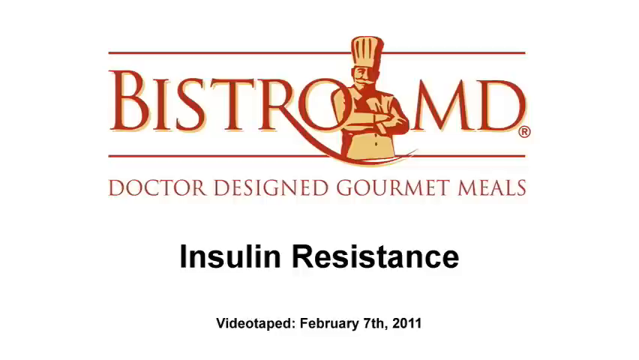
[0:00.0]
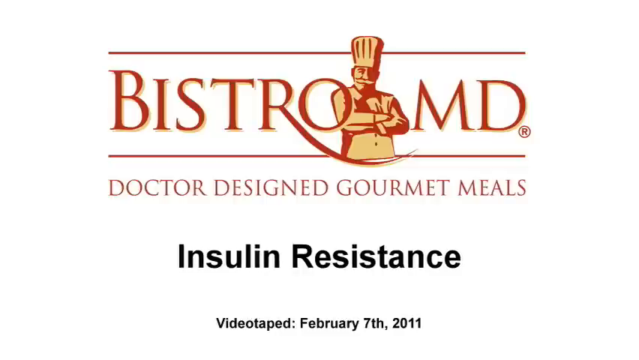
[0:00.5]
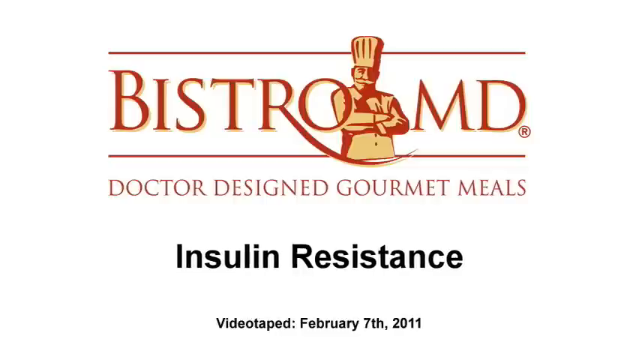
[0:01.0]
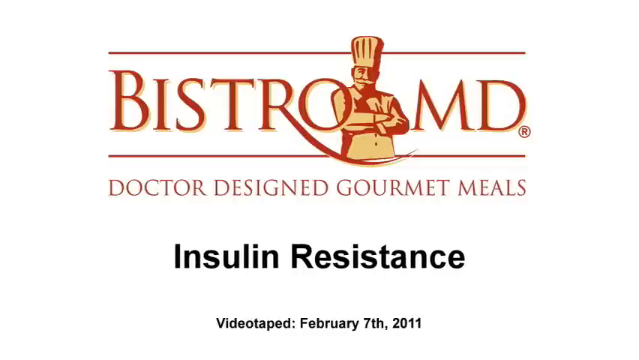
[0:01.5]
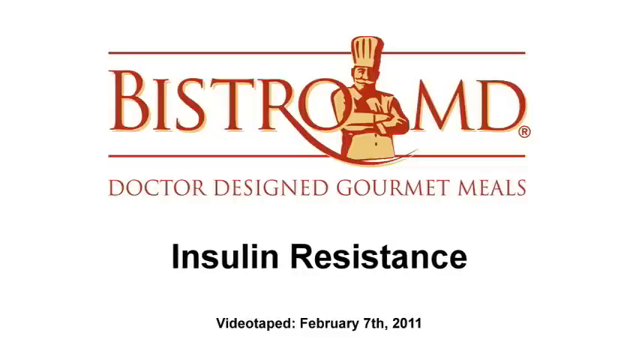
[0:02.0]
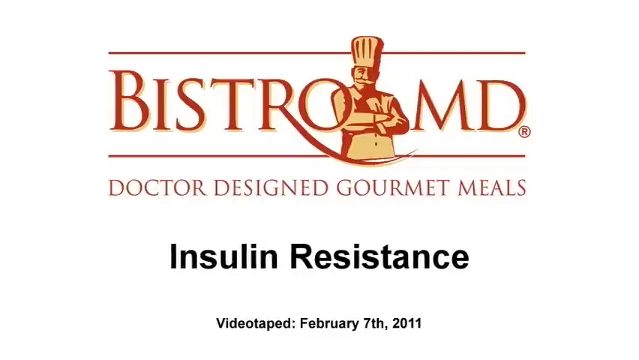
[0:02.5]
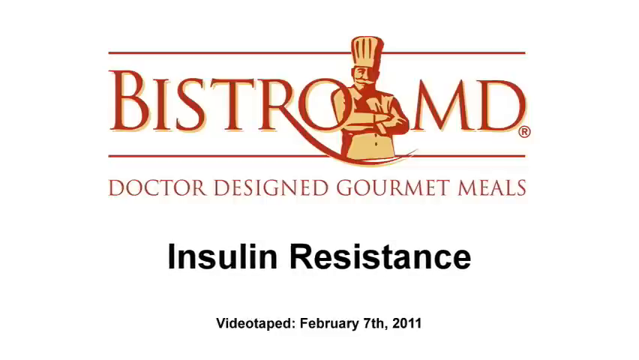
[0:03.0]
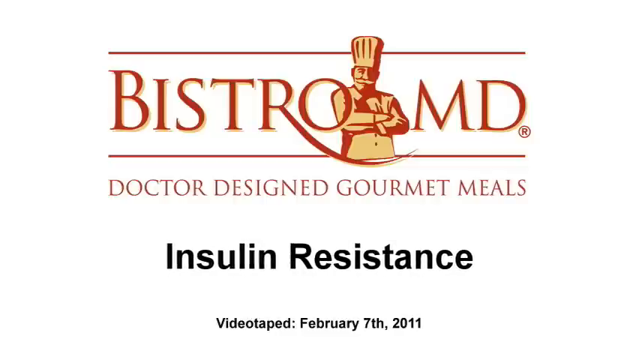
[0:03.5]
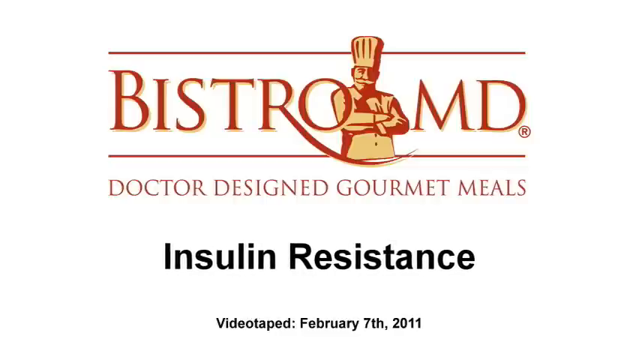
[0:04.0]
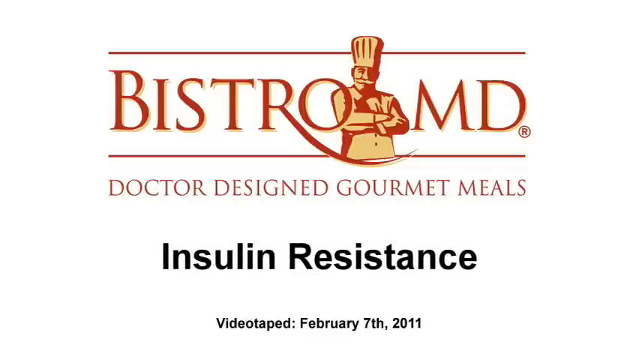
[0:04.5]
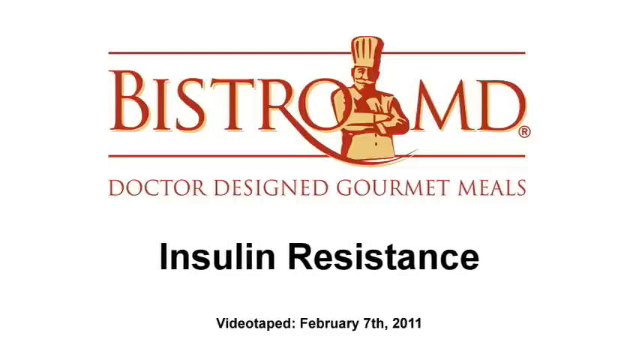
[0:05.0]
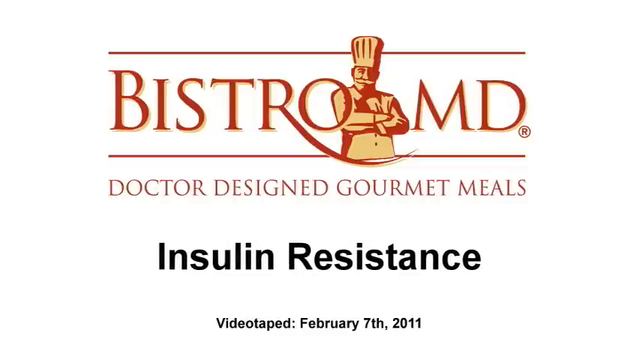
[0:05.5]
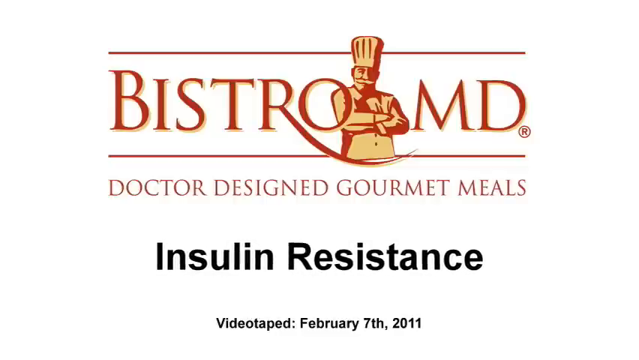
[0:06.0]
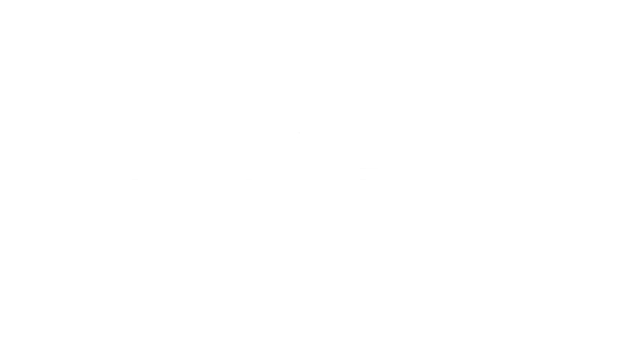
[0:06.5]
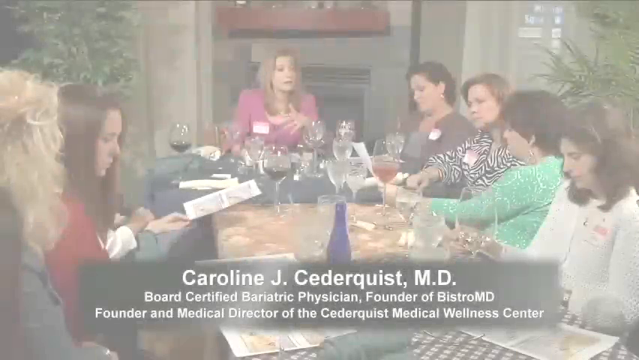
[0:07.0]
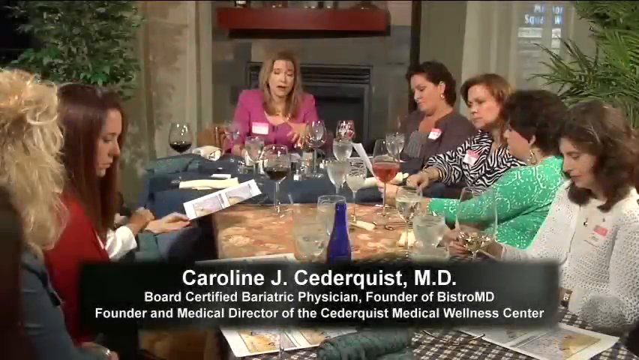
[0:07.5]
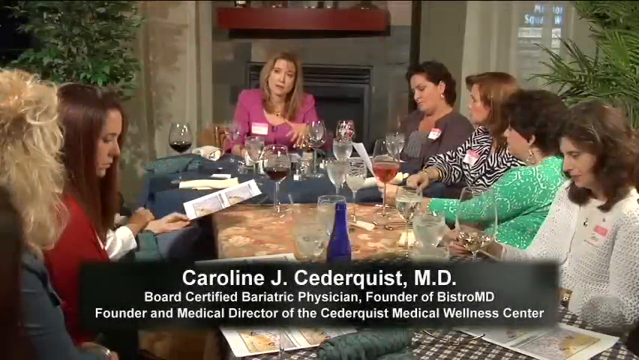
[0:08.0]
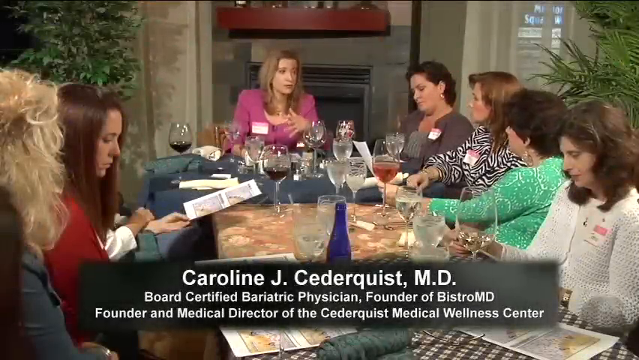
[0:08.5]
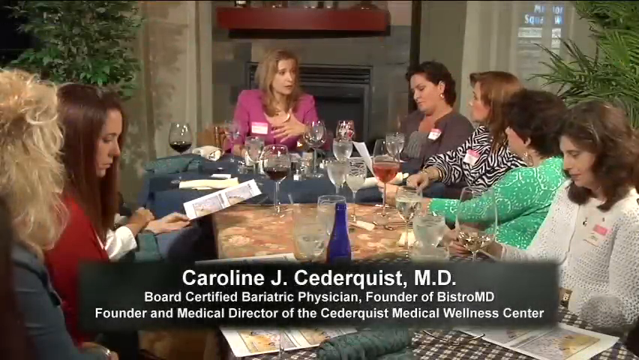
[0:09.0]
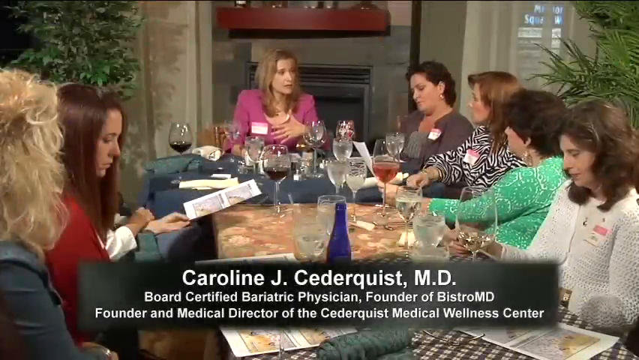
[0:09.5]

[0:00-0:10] A logo appears on the screen reading "Bistro MD", "doctors designed gourmet meals" and "insulin resistance". The opening screen also shows that this was videotaped on February 7, 2011. A group of women sits around a table talking, apparently inside a restaurant, holding different pieces of paper and drinking wine and/or water. A banner on the screen reads "Carolyn J. Cederquist, MD, board certified, bariatric physician, founder of Bistro MD, founder and medical director of the Cederquist Medical Wellness Center". The women appear to be having a meeting.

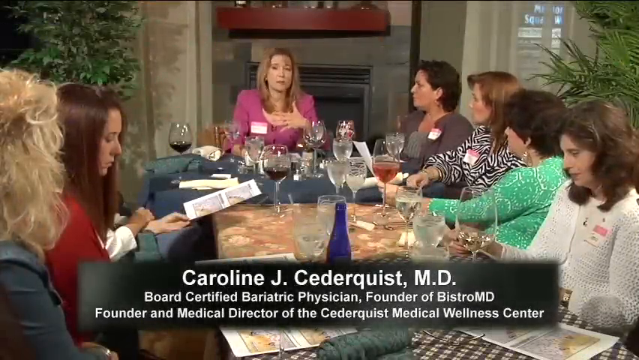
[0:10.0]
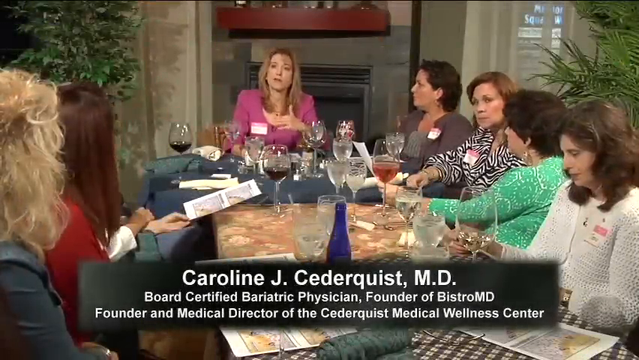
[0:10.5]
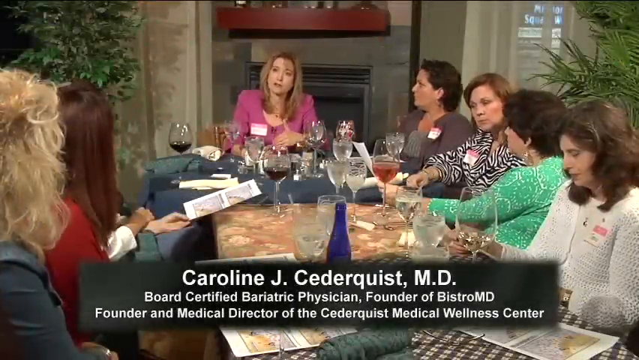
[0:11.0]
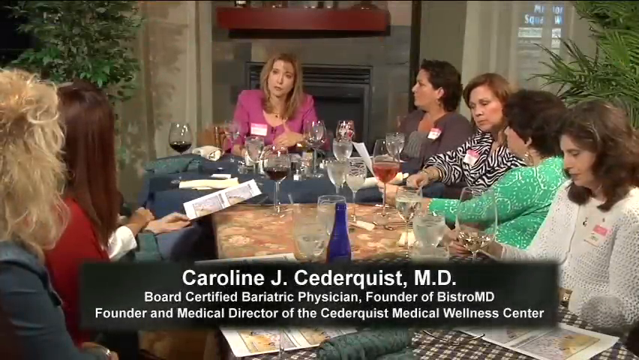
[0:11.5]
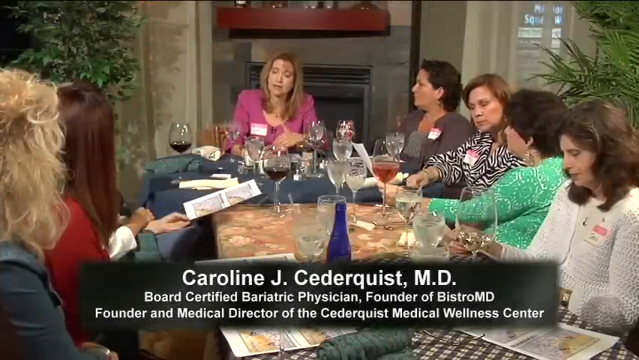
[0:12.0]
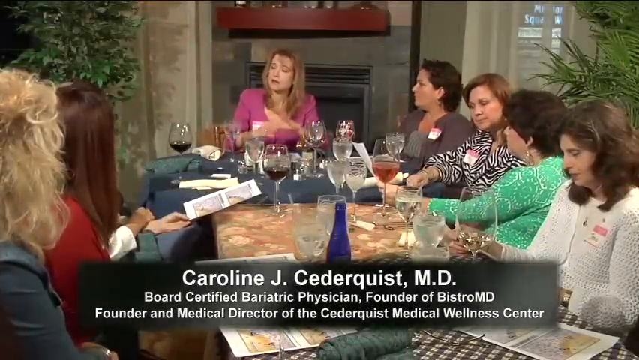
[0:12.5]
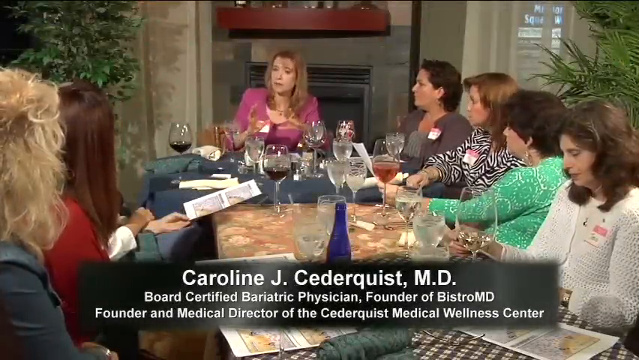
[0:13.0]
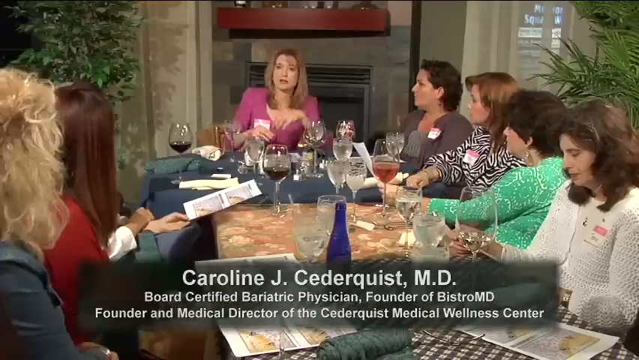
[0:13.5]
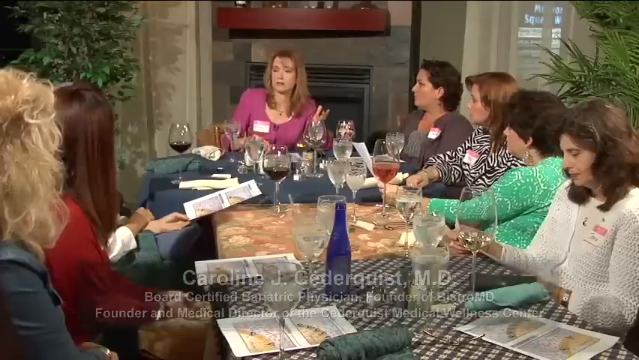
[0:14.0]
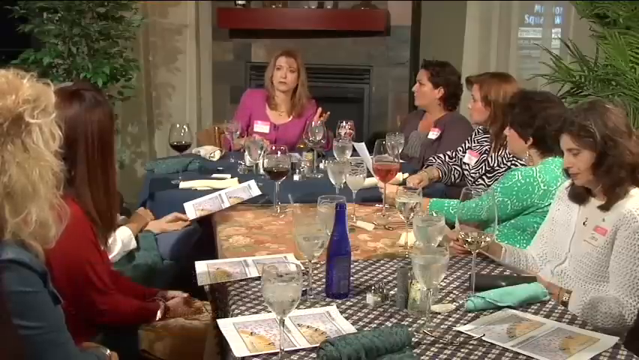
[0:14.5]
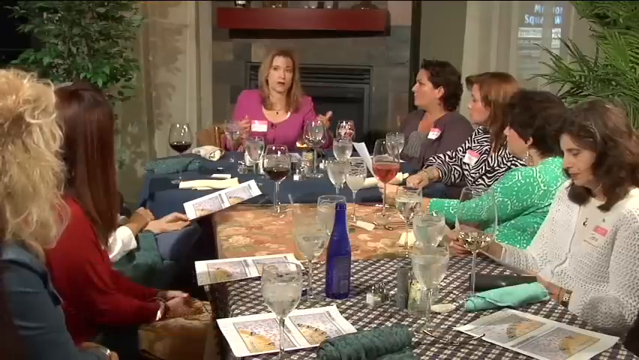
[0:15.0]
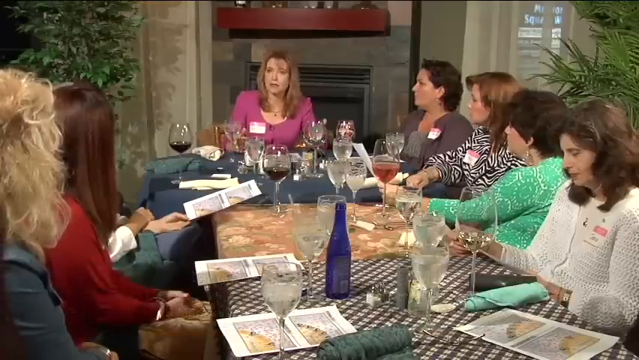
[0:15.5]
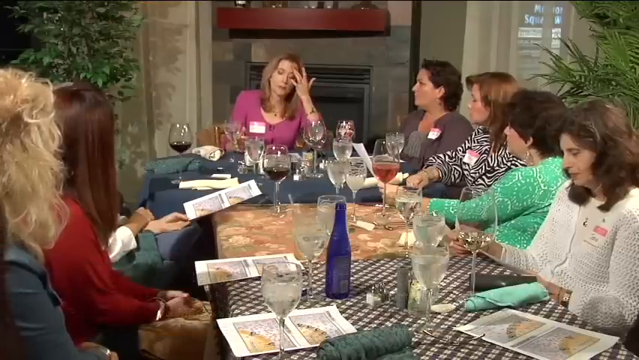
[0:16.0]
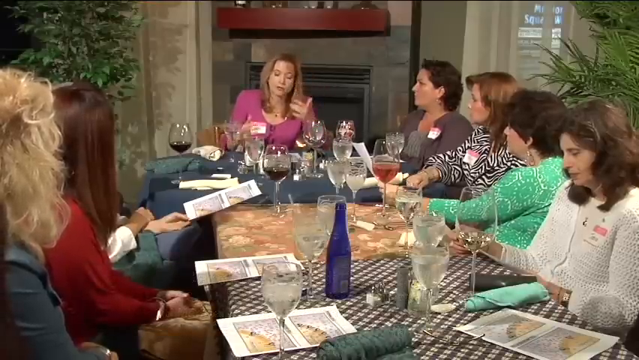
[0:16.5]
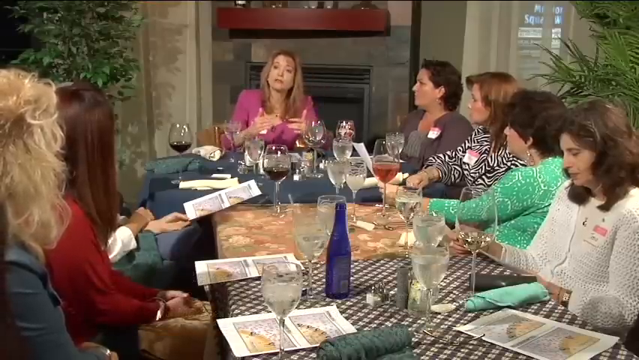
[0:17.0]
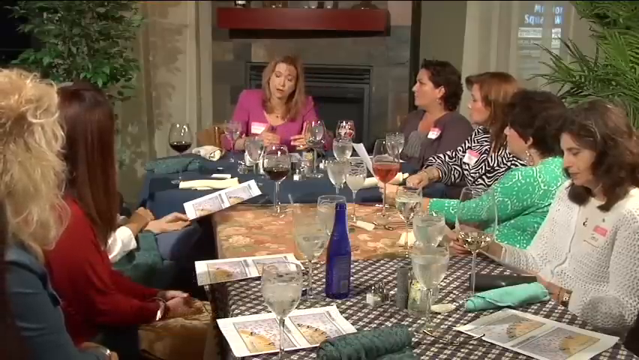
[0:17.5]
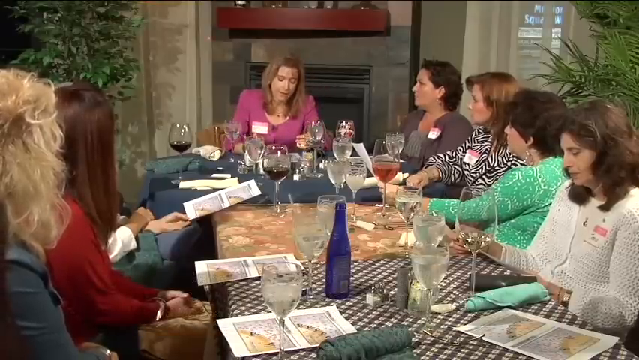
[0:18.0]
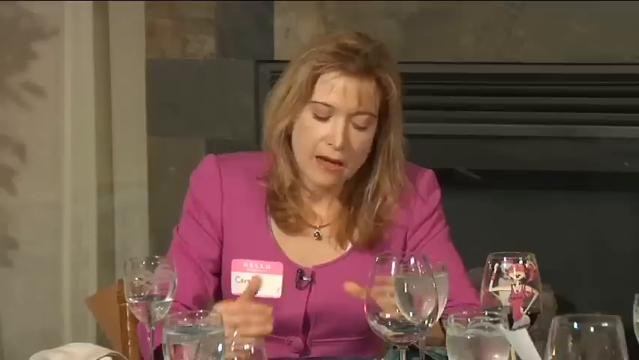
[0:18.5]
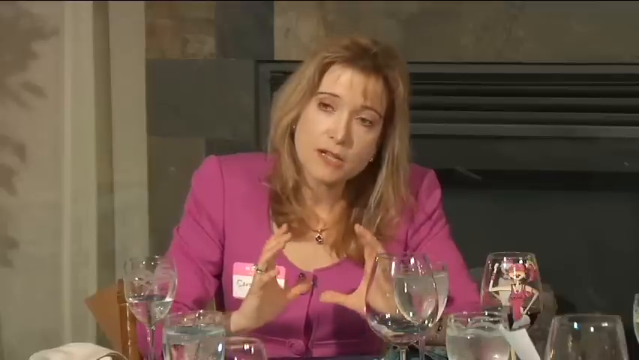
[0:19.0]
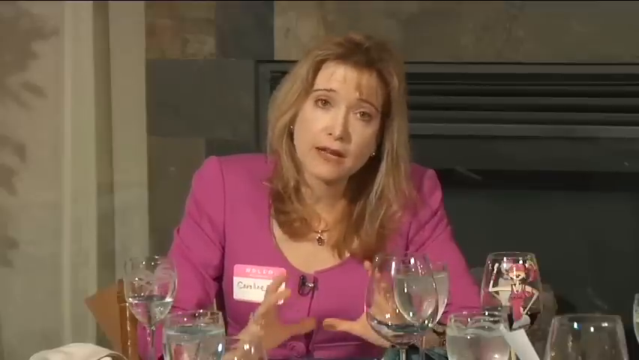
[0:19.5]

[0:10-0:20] A group of women sits around a table talking, at what looks like a dining room table in either a home or a restaurant. Every woman has a wine glass or a glass of water in front of her; some have red wine, some white wine, and some water. A woman at the head of the table is talking, holding her left and right hands out in front of her and waving them around in different motions. Near the end, she has both hands almost clasped together in front of her and kind of waves them to and fro. Text at the bottom of the screen reads "Carolyn J. Cederquist, MD".